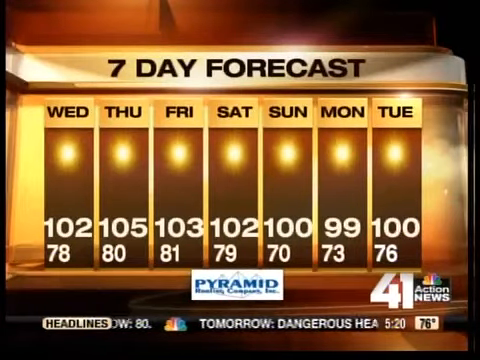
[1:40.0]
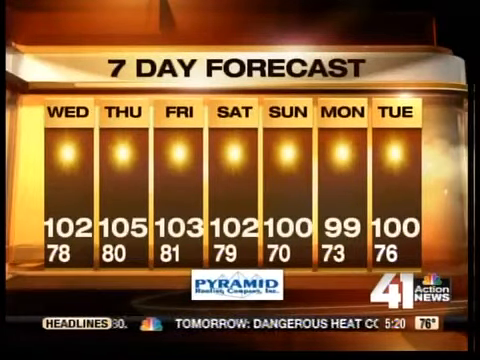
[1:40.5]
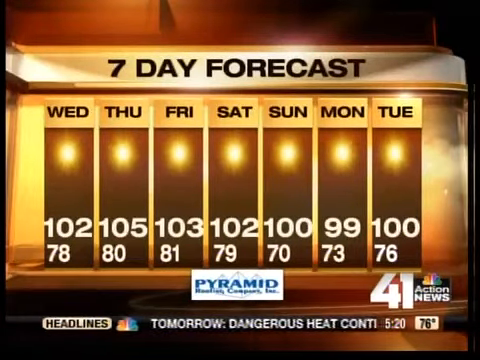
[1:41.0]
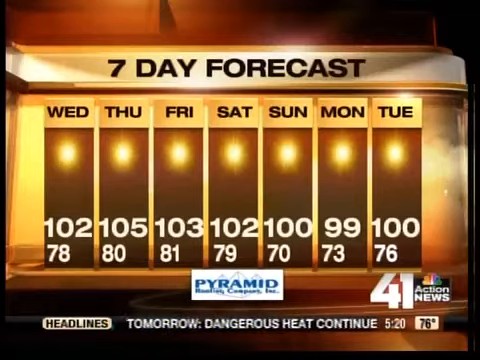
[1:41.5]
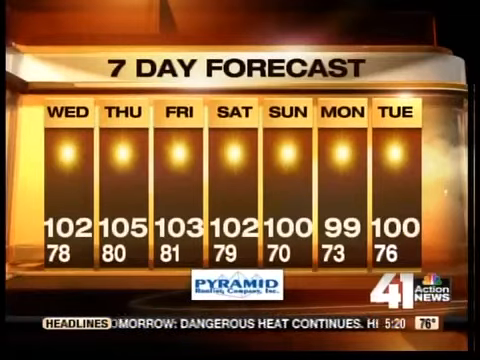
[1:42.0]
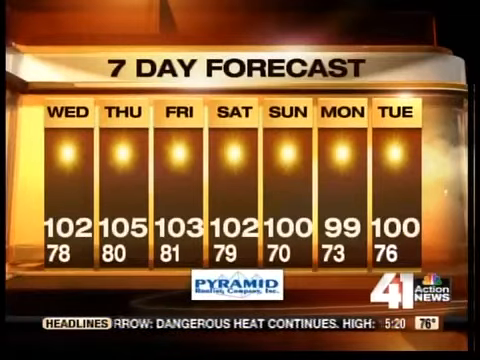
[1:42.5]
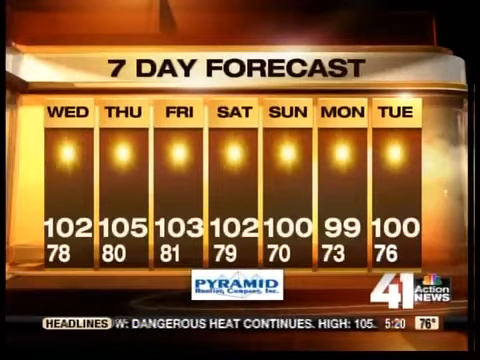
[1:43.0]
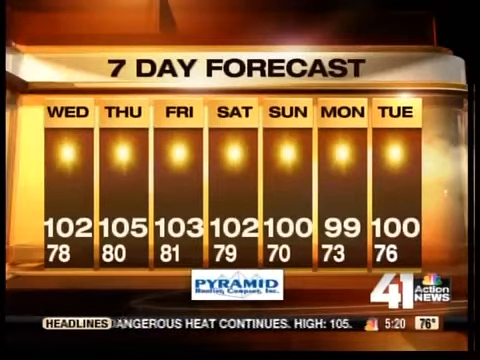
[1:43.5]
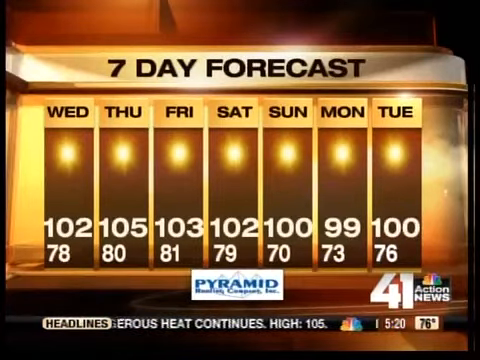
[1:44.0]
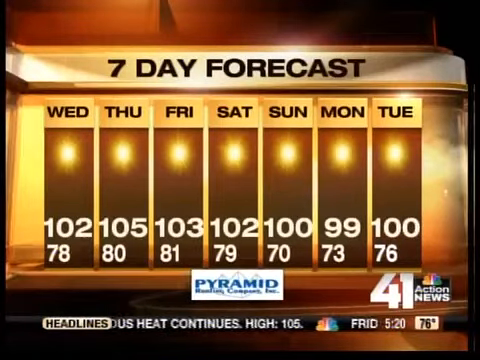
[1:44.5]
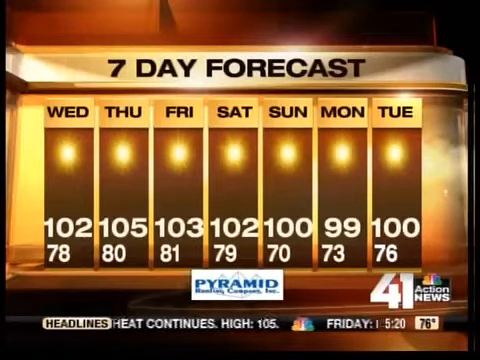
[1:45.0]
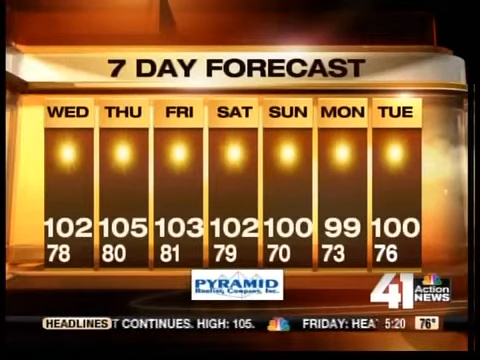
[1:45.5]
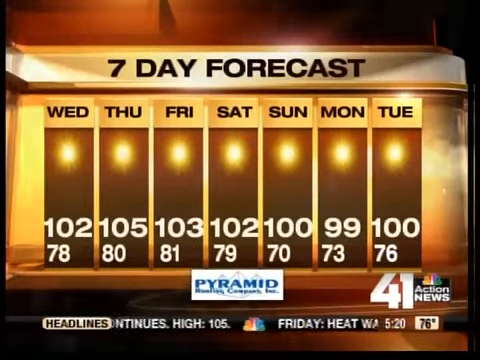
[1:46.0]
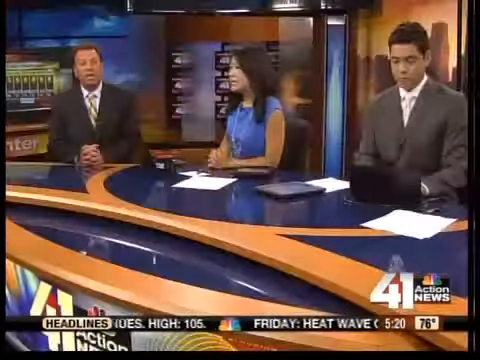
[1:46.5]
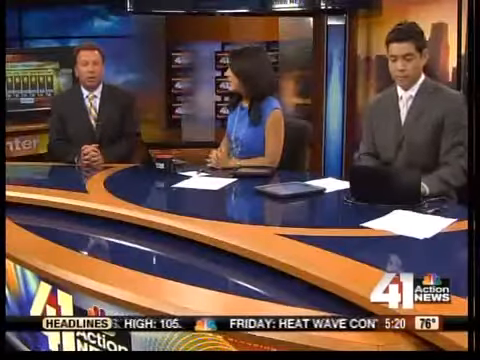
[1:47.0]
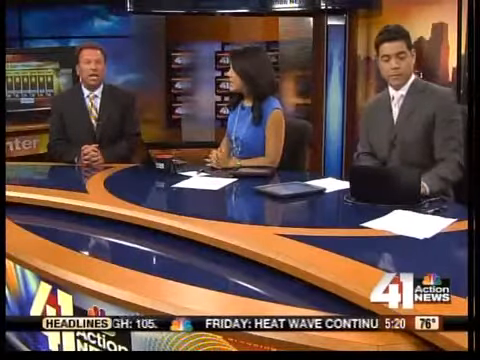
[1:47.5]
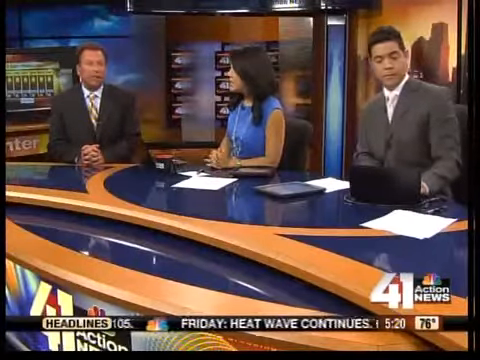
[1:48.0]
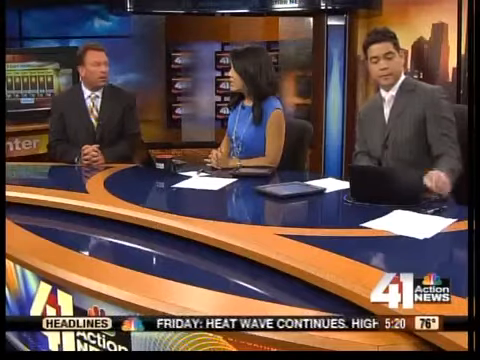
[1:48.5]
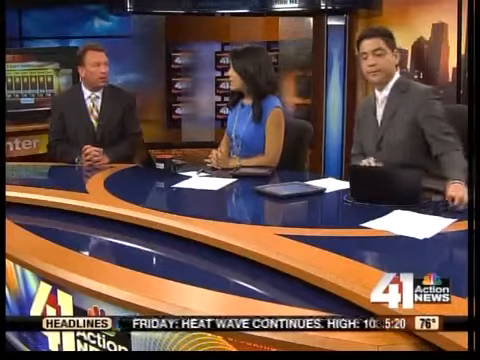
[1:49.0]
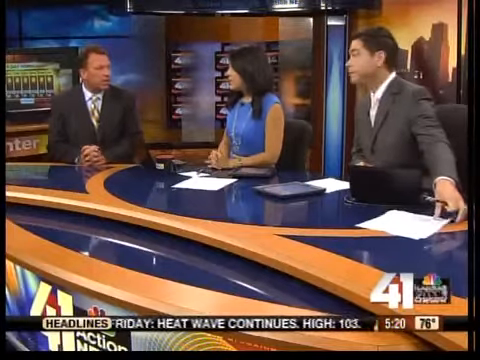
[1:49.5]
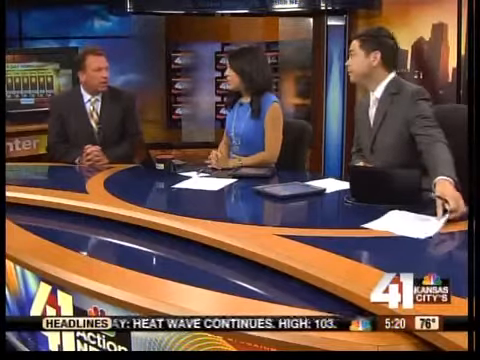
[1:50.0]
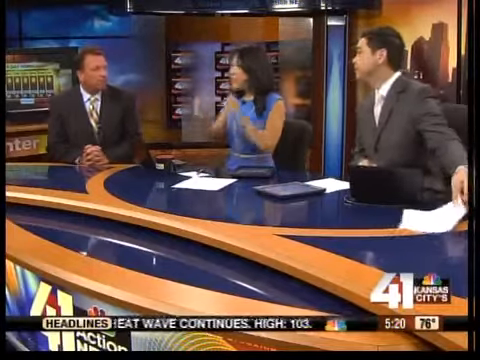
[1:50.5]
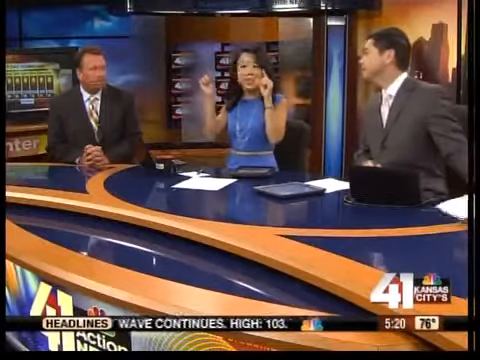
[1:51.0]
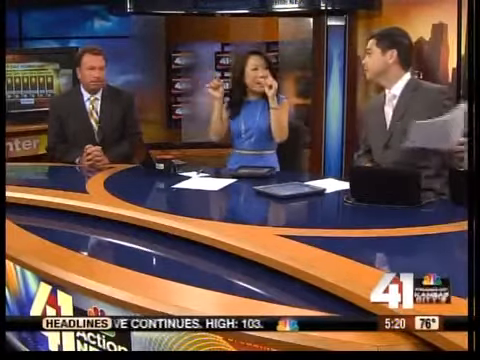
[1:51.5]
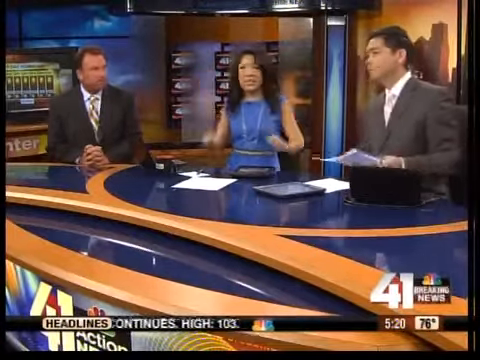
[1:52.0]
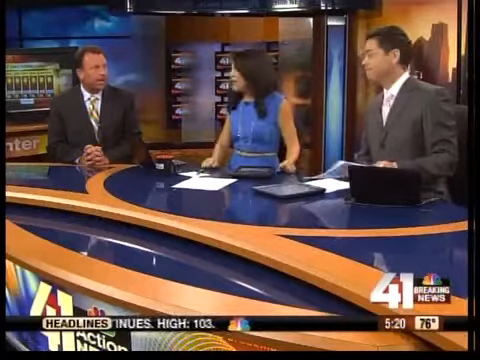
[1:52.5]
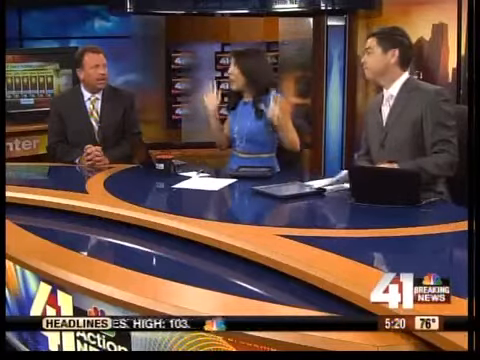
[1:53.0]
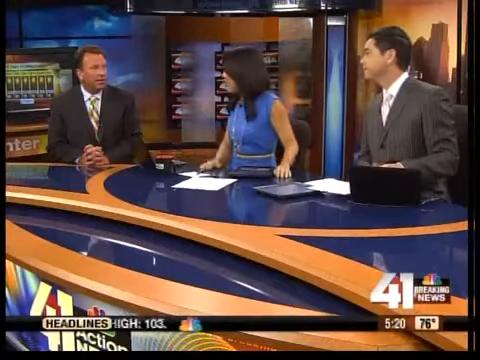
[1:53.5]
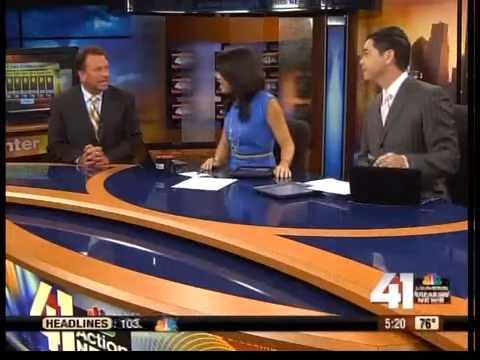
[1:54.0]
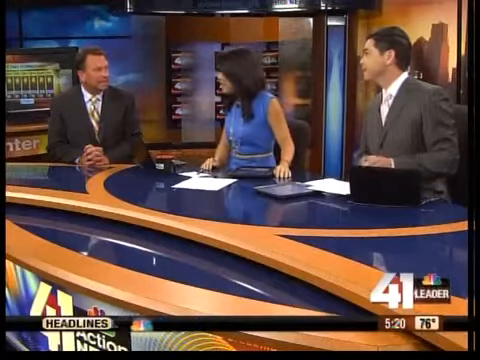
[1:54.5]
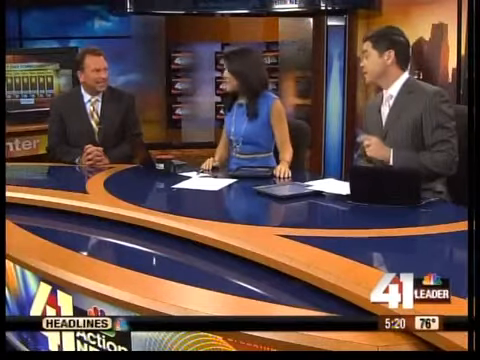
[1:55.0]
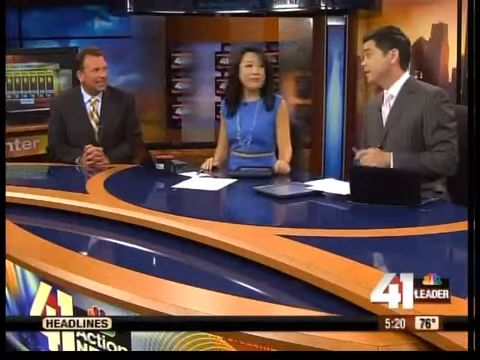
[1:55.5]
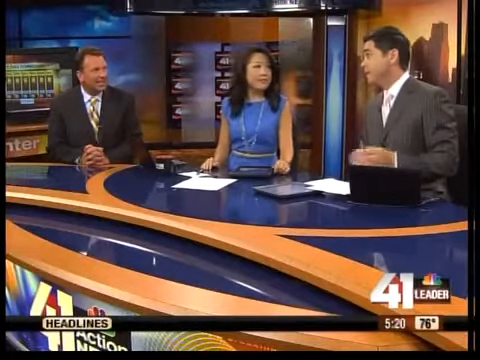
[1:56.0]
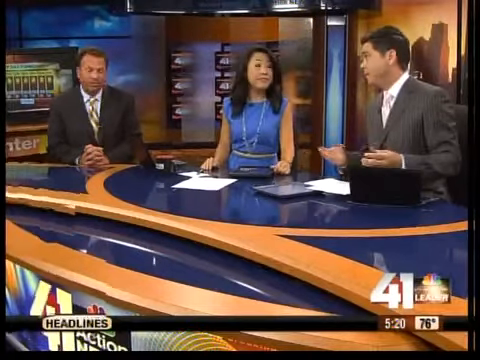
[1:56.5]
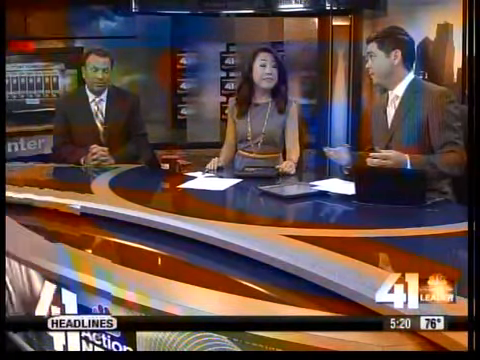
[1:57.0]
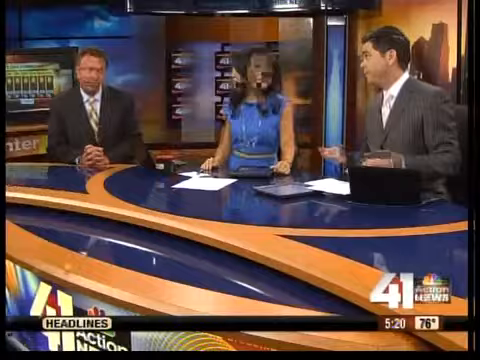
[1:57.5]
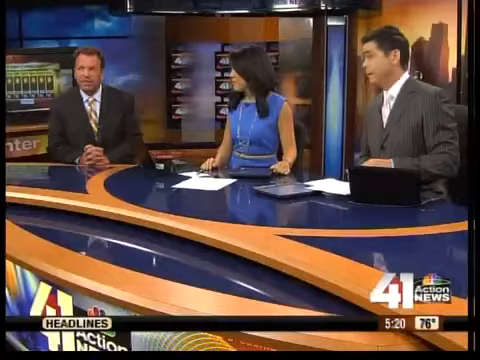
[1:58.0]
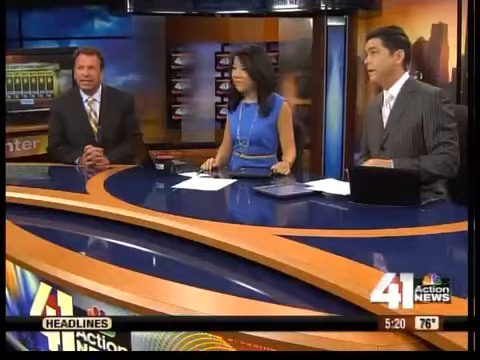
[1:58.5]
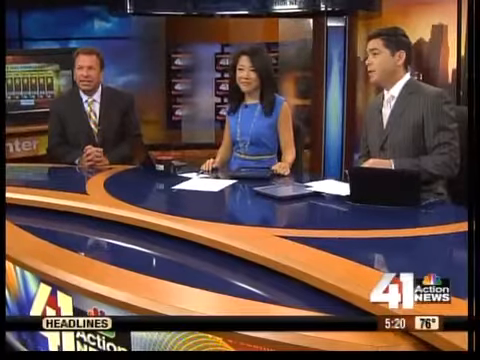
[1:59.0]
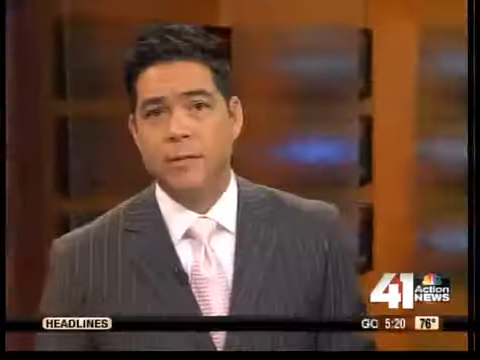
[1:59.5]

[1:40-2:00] The seven-day forecast image is still shown, and the ticker bar at the bottom continues to scroll, reading "tomorrow dangerous heat continues high 105." The image slowly fades to news anchors sitting behind a desk, including the weatherman, who sits on the left side of the desk, with a woman in the middle and another man on the right. The man on the right looks to be looking down at a black laptop on the desk and appears to be typing something. The weatherman, his body facing the center of the camera, continues speaking to the camera with his hands resting clasped together, fingers intertwined, on the desk. He then turns his attention to the woman in the middle, who lifts both hands and makes a gesture with her thumbs and pointer fingers, almost as if indicating something small, while turning toward the anchor on the right side of the screen. That anchor looks at her with a somewhat serious look on his face, shuffles some papers in his hands, and turns toward the male anchor at the far left of the screen. The anchor on the right side of the screen then points at the news anchor with a pencil held in his left hand.